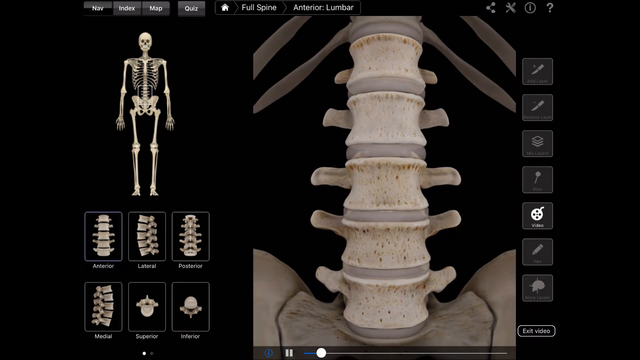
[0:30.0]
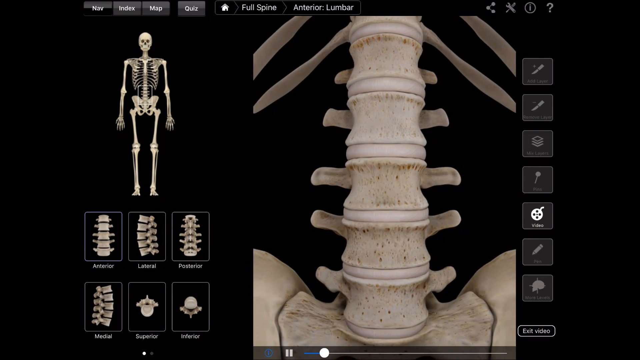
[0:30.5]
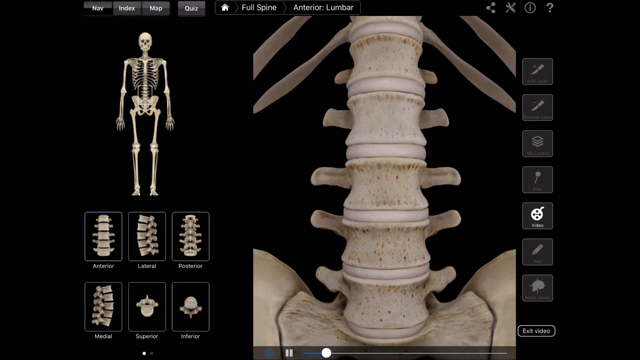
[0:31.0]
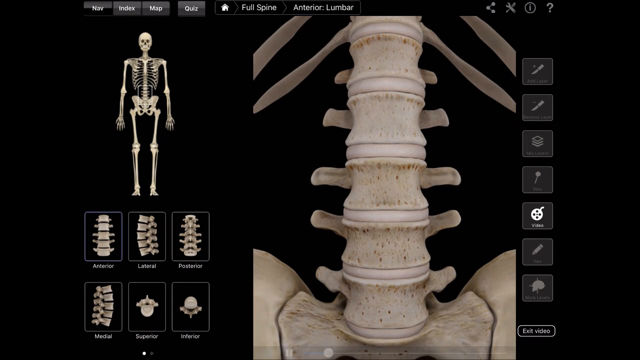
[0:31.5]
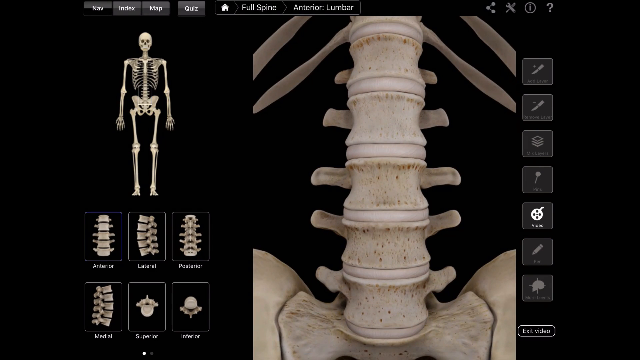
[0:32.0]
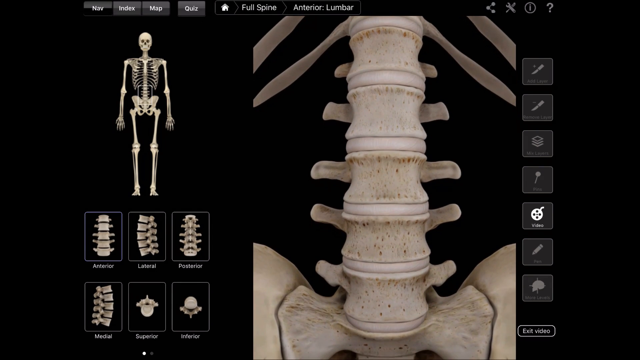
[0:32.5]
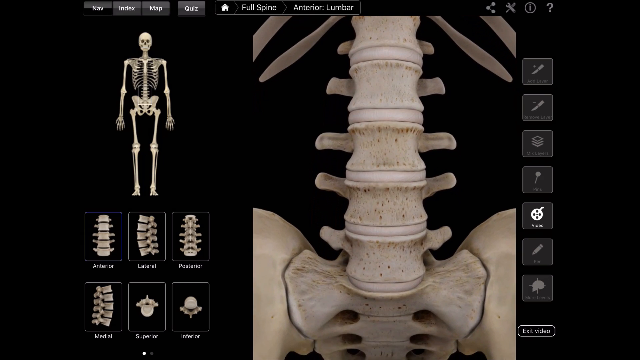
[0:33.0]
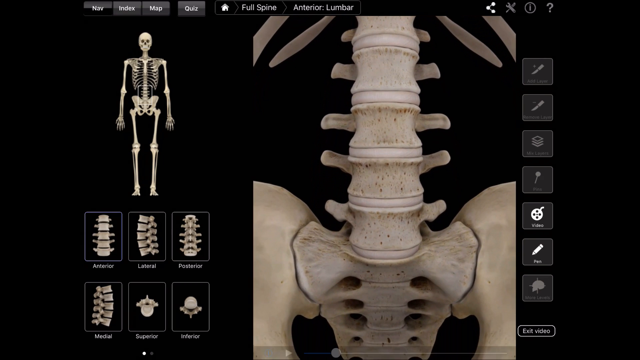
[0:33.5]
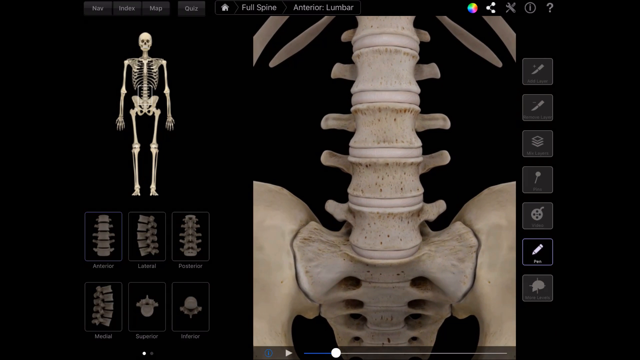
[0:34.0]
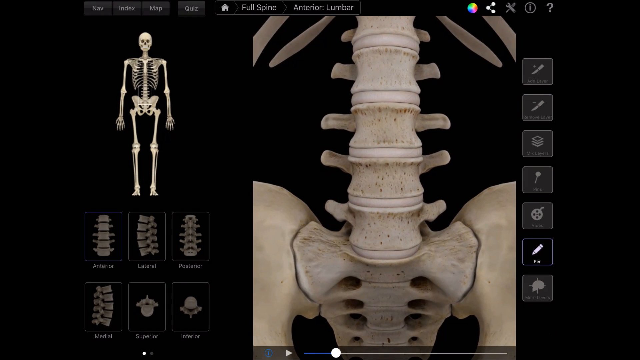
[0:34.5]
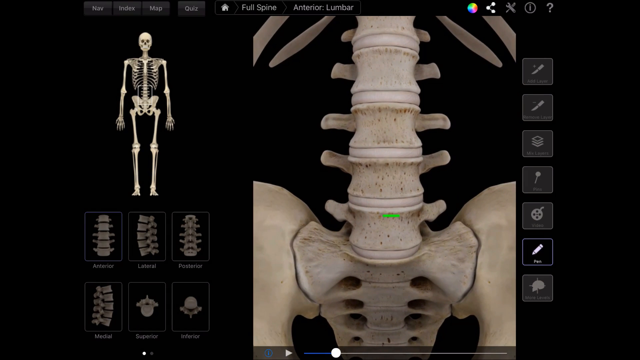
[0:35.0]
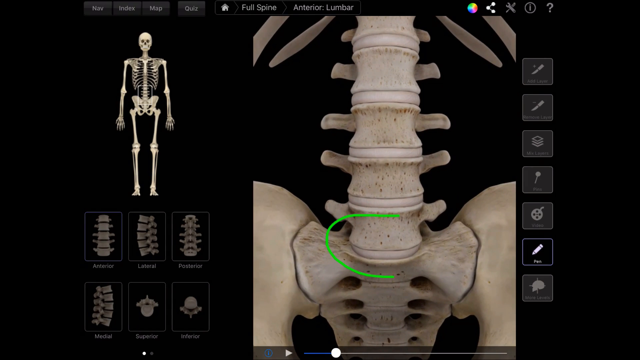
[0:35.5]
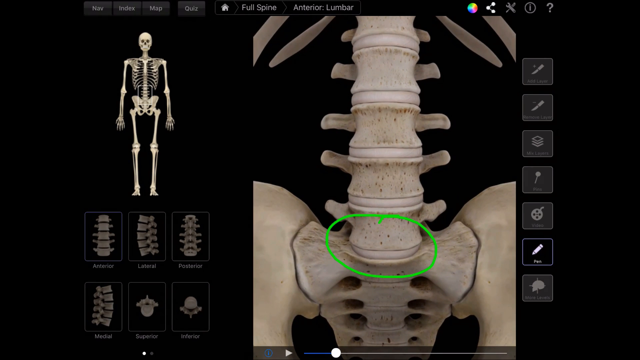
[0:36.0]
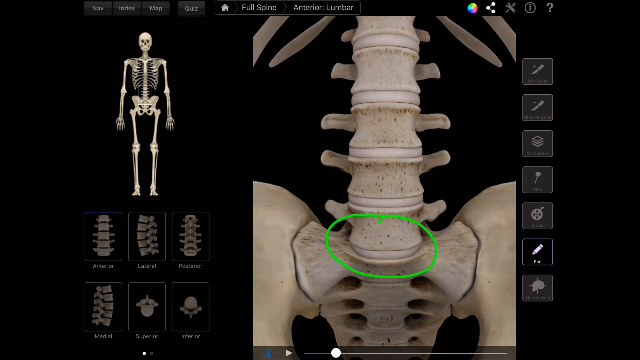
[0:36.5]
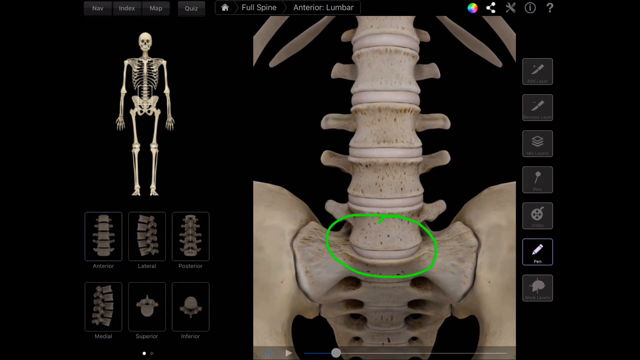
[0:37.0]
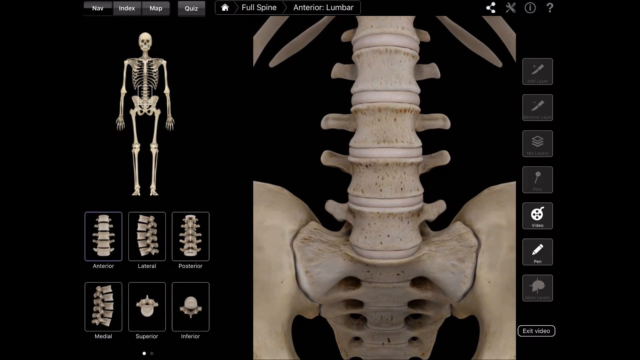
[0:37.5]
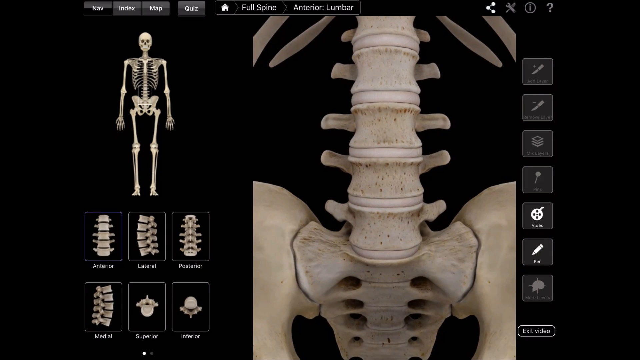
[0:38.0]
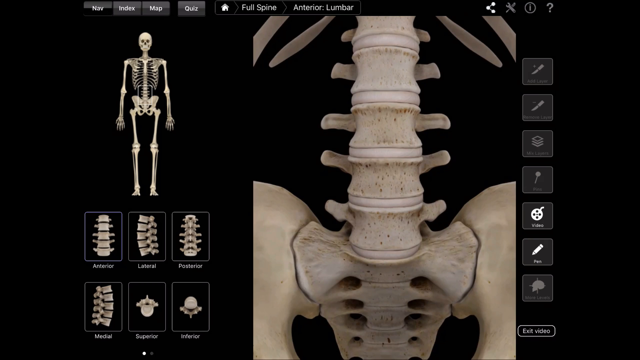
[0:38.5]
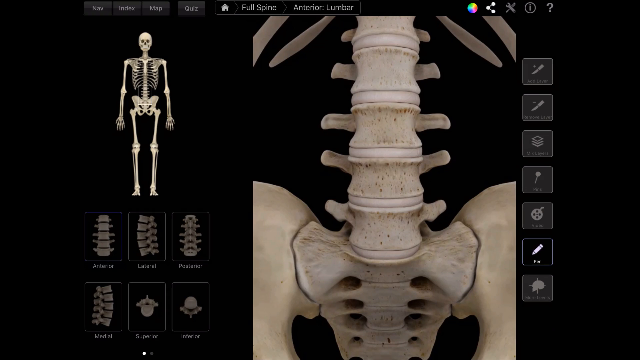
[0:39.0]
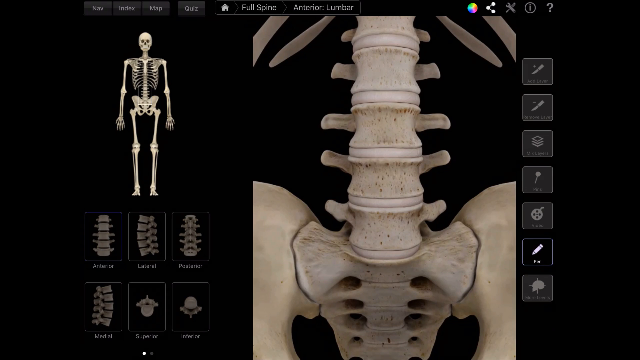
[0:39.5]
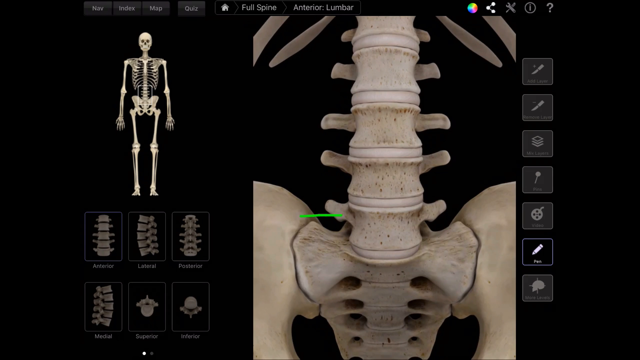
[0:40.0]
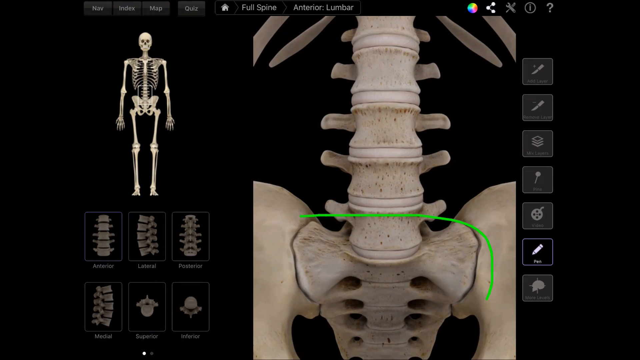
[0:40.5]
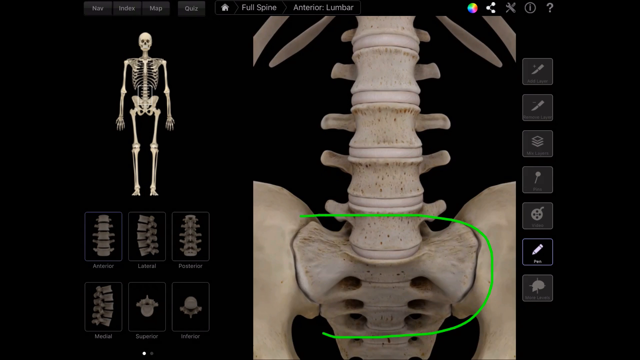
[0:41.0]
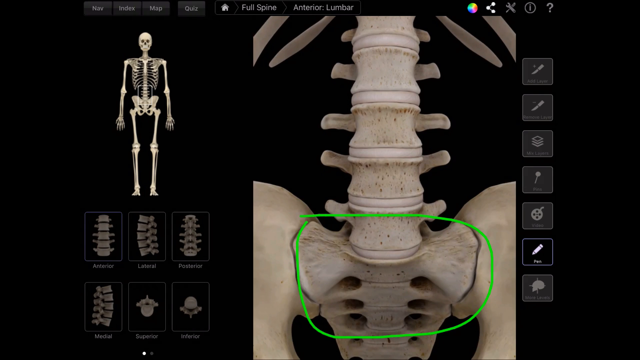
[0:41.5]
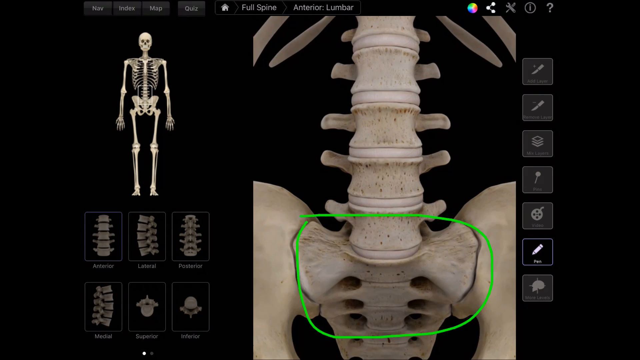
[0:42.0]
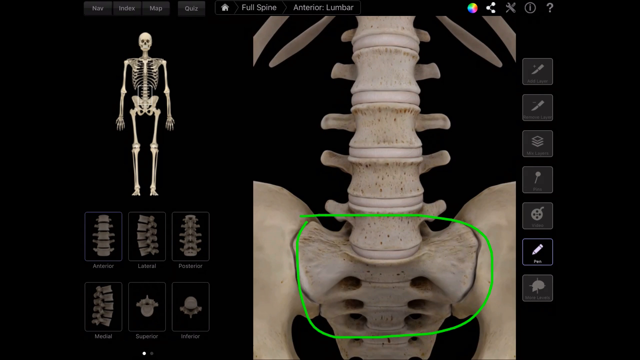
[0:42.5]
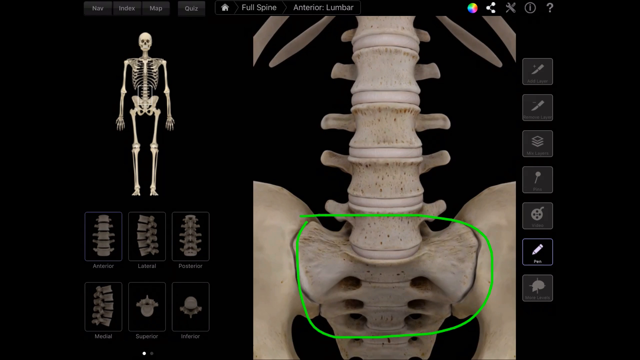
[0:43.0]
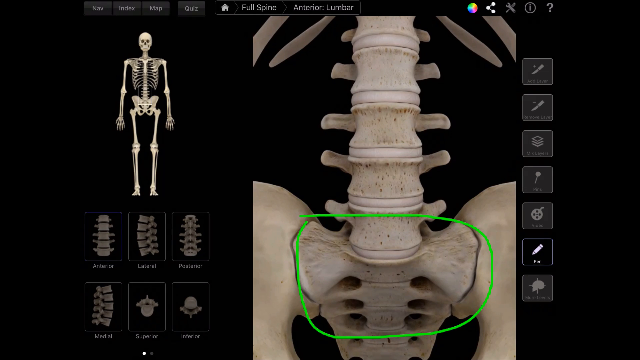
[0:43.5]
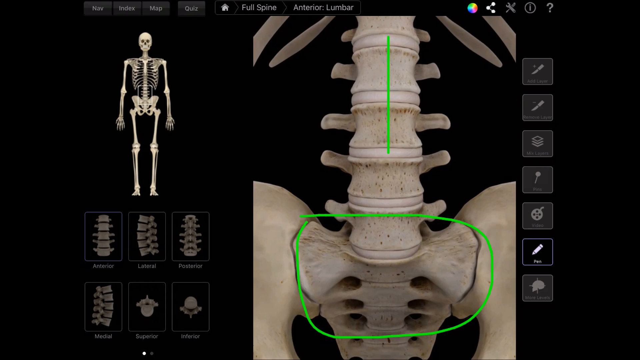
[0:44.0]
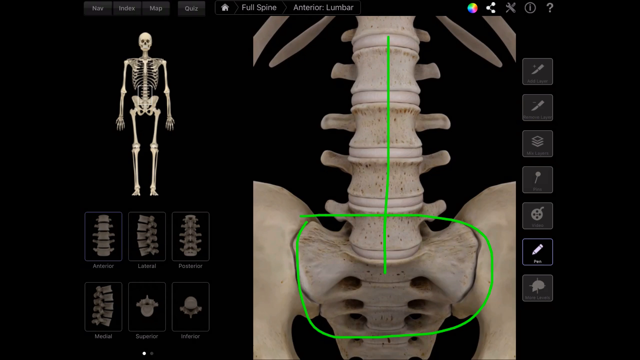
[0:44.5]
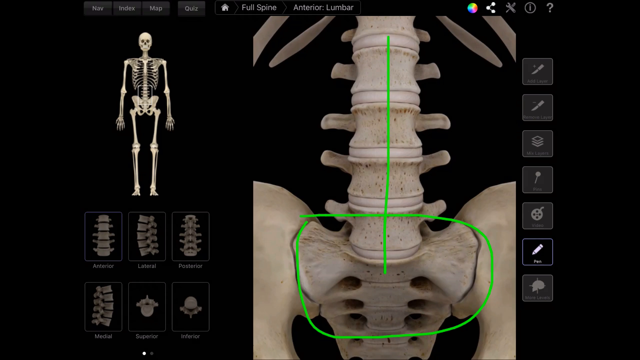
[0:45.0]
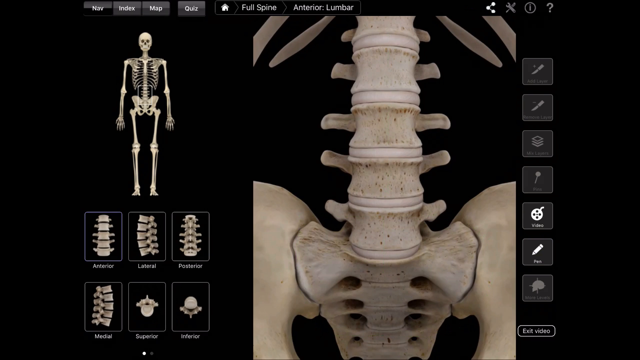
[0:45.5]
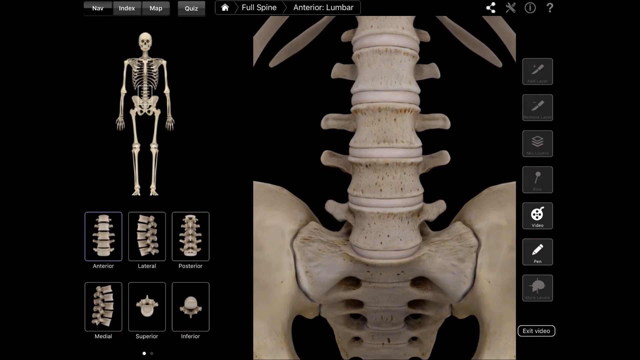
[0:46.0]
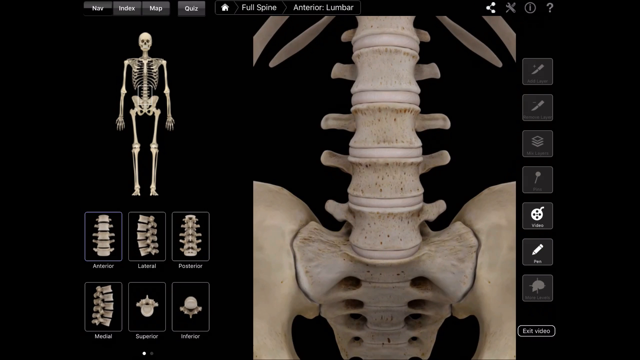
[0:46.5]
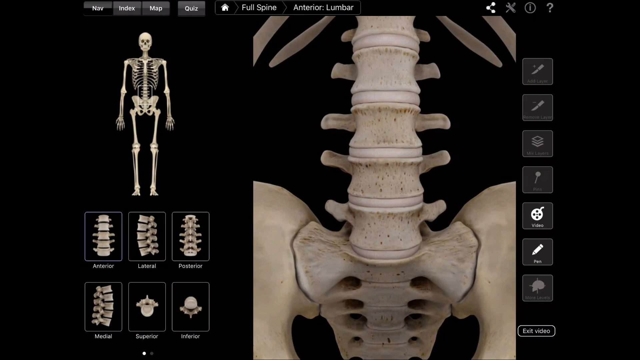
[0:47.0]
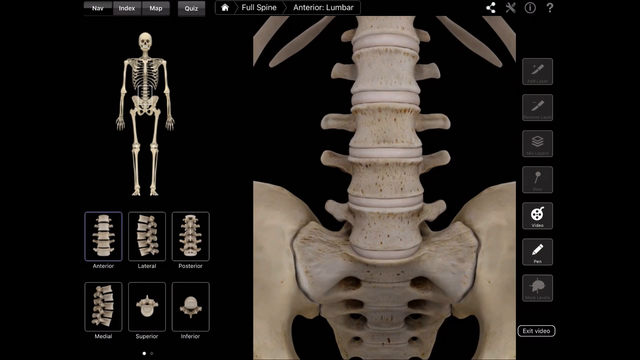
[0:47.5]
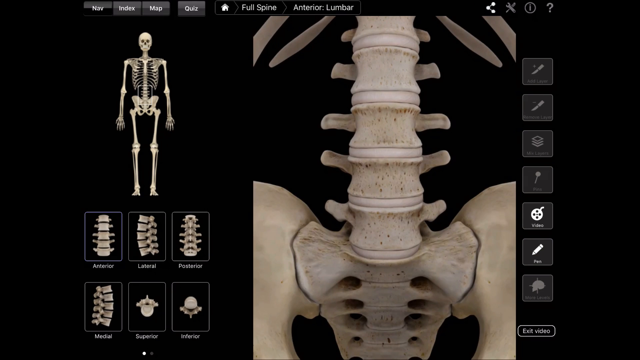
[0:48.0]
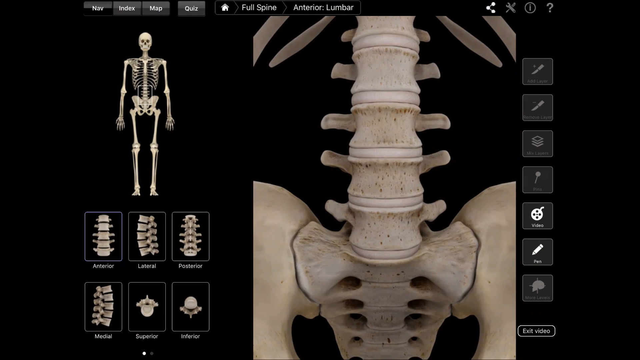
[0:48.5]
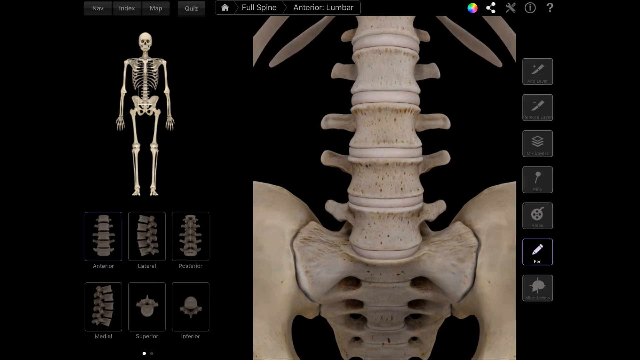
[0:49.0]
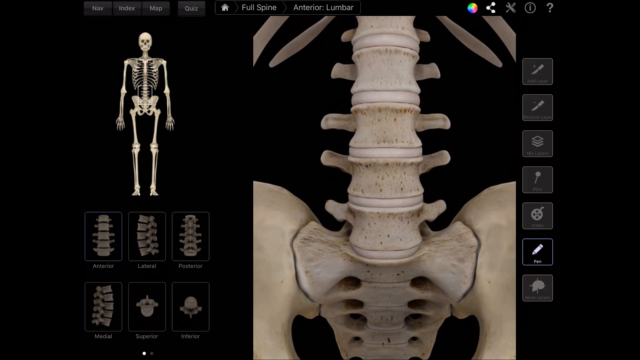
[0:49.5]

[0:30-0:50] The full spine anterior lumbar view returns, now even more zoomed in so the discs between the bones are visible. Where there were only gaps before, there is now something grayish that turns white between the bones. A green circle is drawn around the lowest disc, and green circles are then drawn around the bones directly above and below that disc, the pelvic bone and the lower spinal bone. A green line is drawn down the middle of the spine, apparently to show how straight it is.